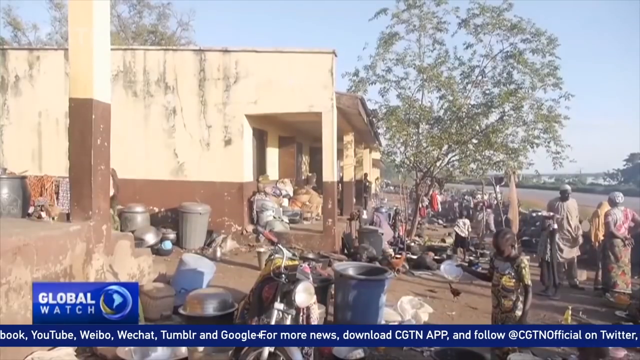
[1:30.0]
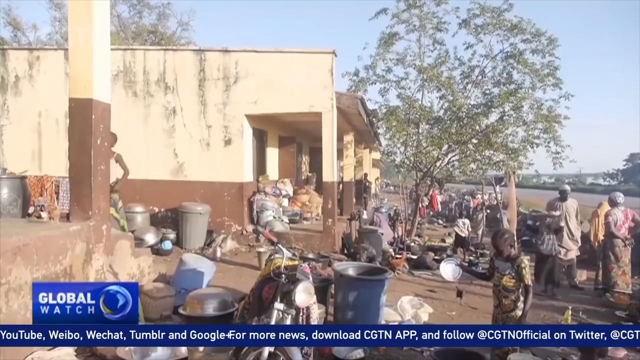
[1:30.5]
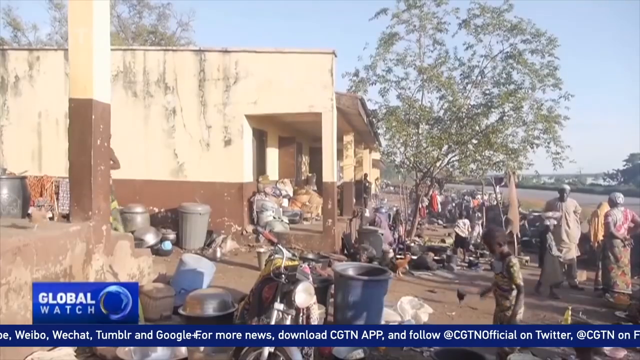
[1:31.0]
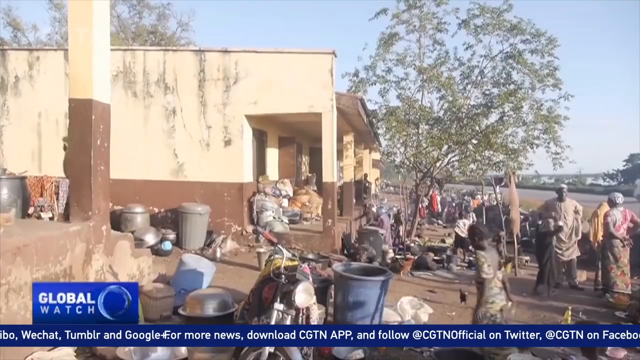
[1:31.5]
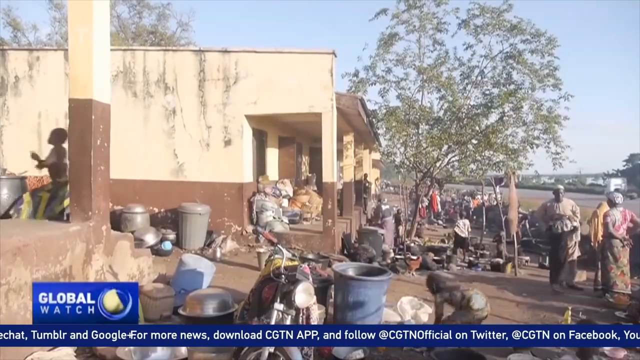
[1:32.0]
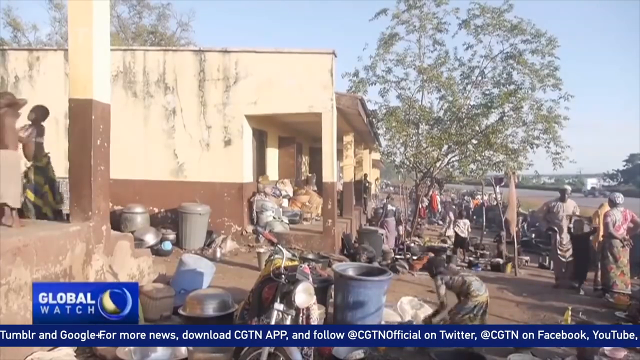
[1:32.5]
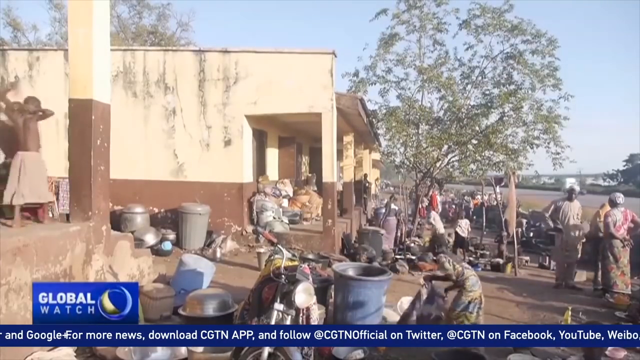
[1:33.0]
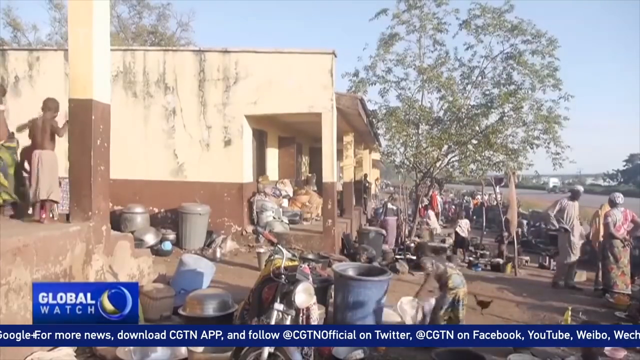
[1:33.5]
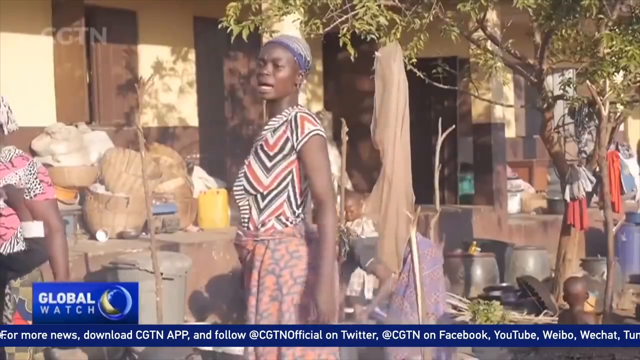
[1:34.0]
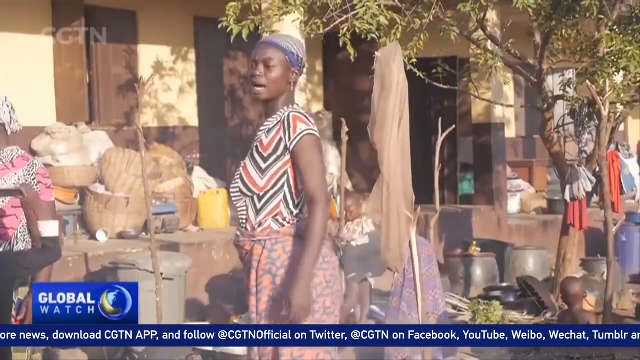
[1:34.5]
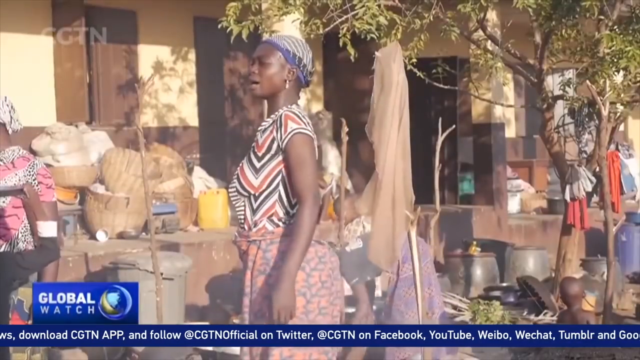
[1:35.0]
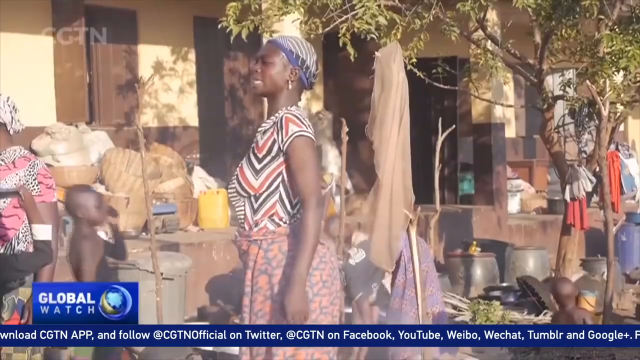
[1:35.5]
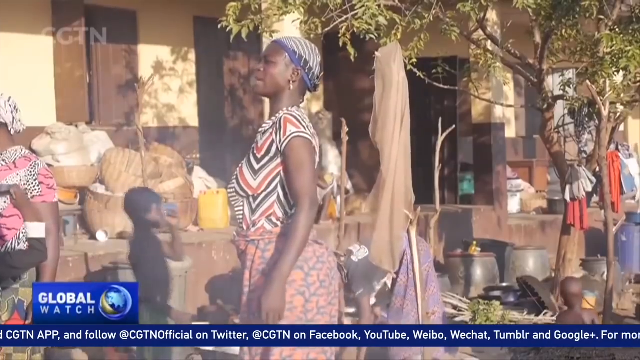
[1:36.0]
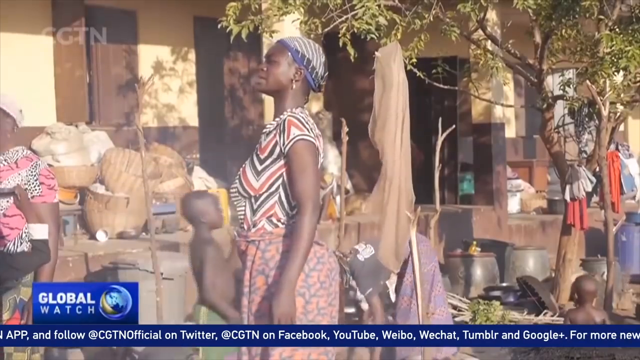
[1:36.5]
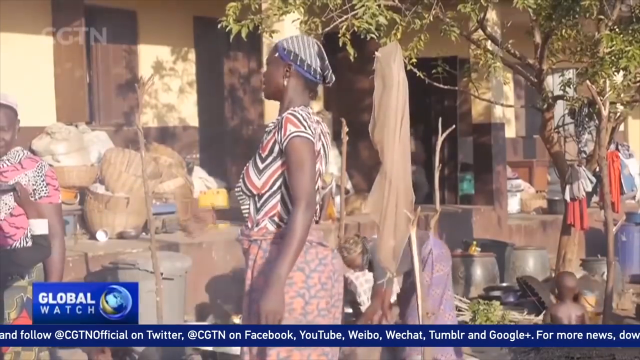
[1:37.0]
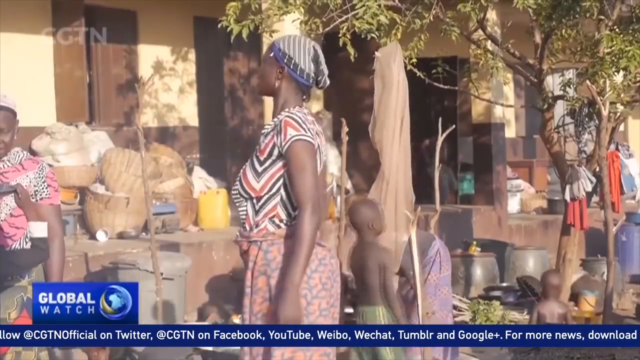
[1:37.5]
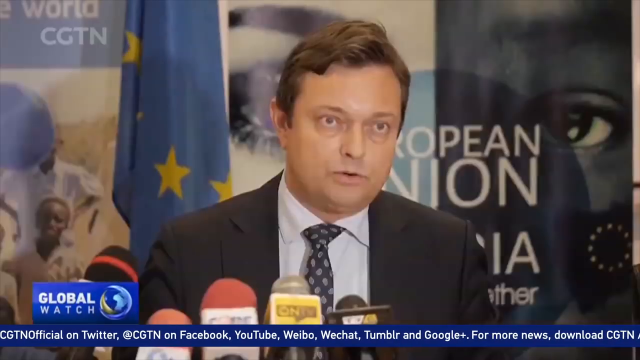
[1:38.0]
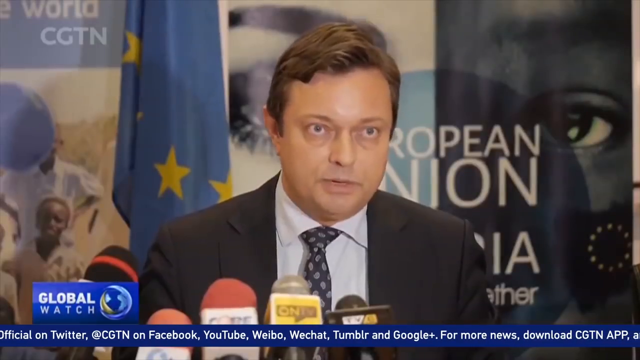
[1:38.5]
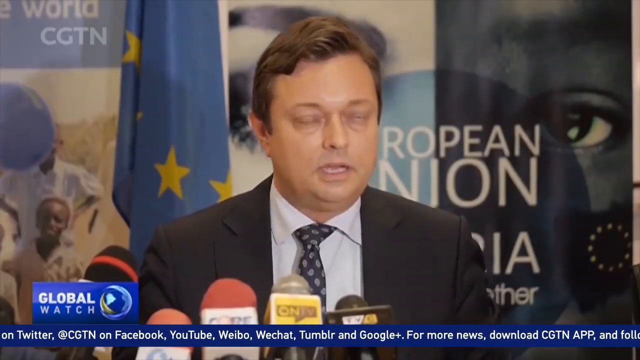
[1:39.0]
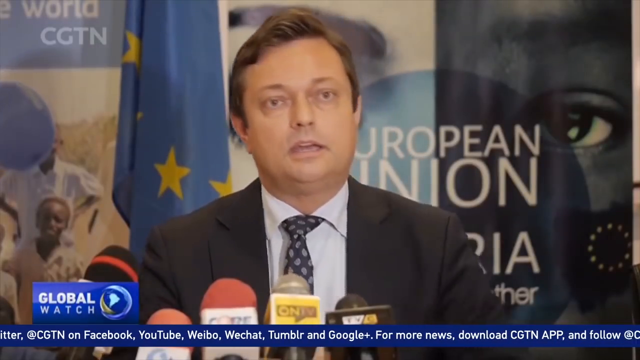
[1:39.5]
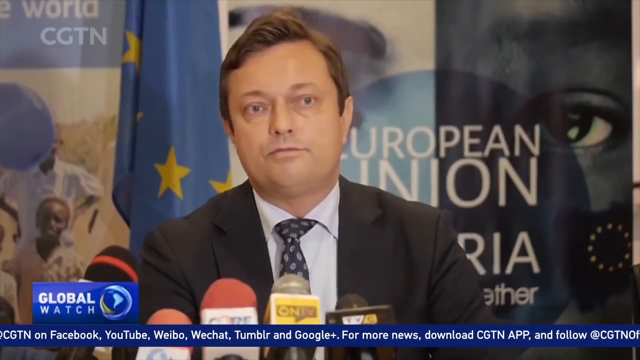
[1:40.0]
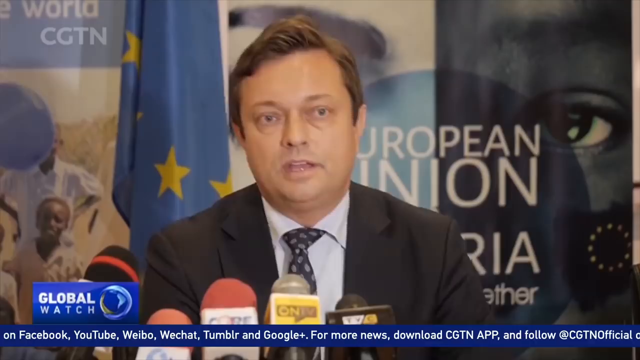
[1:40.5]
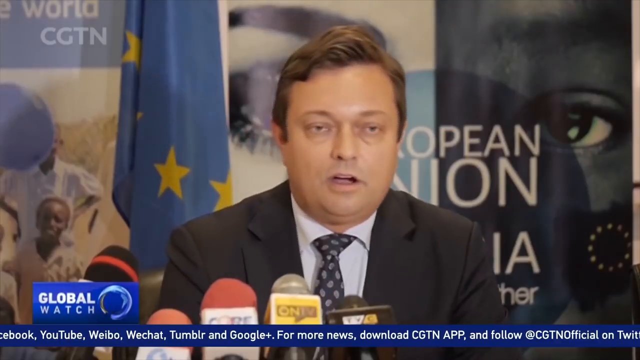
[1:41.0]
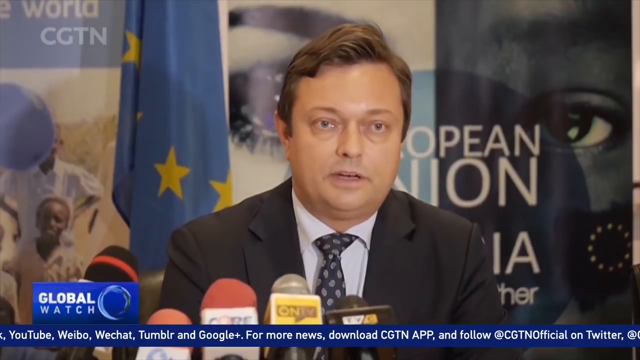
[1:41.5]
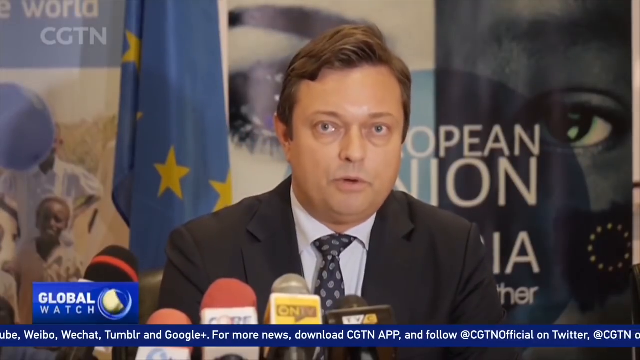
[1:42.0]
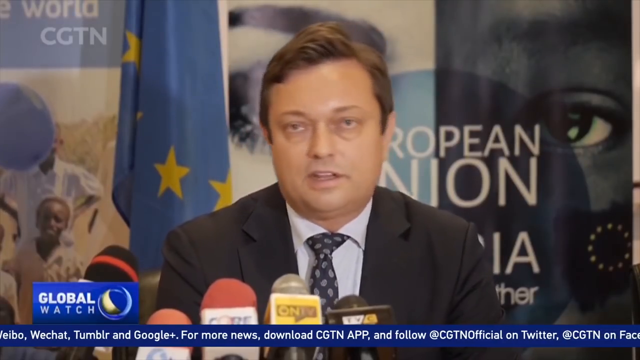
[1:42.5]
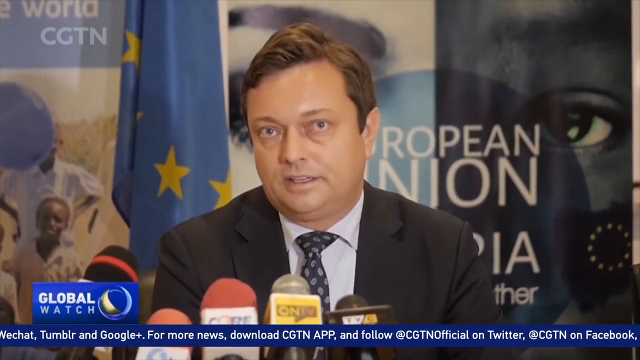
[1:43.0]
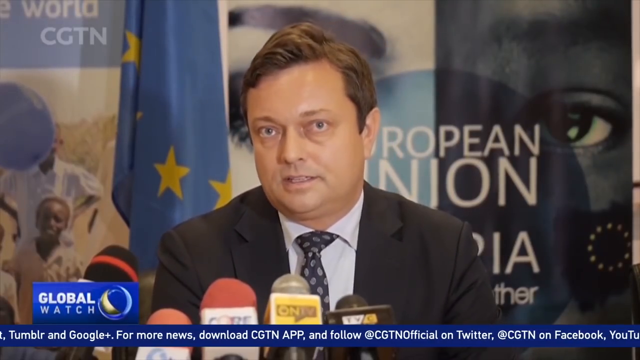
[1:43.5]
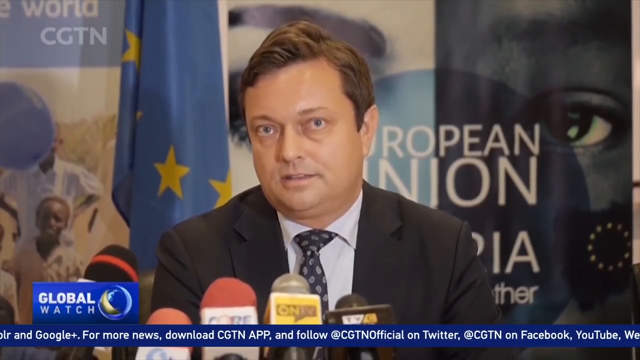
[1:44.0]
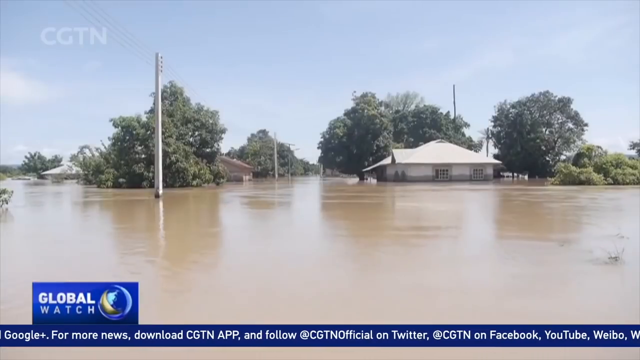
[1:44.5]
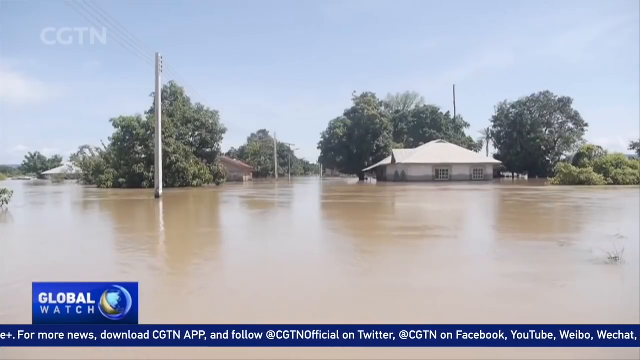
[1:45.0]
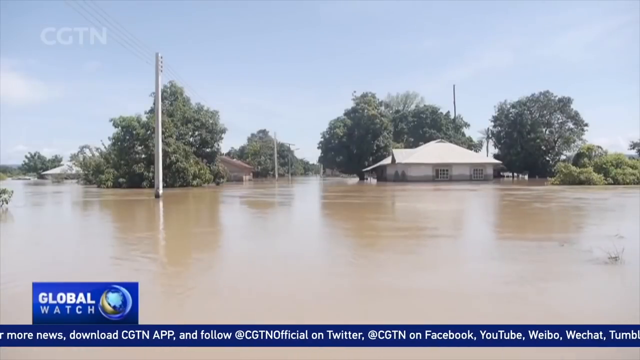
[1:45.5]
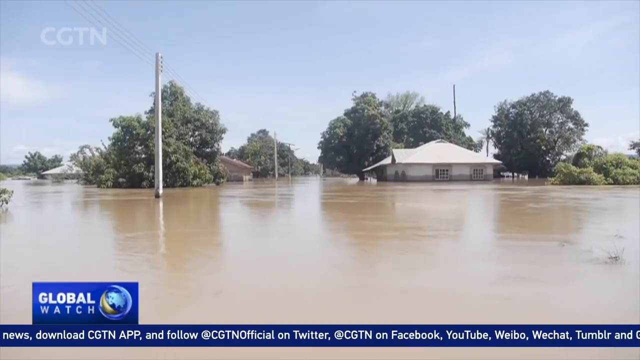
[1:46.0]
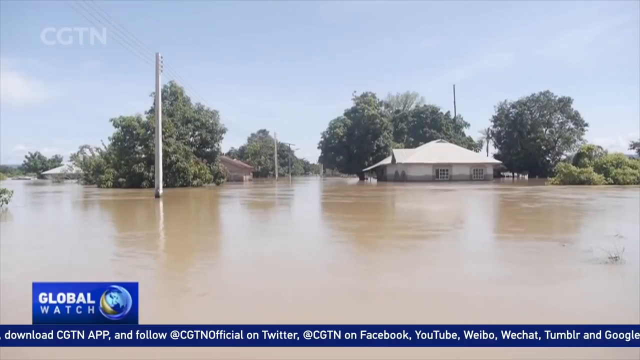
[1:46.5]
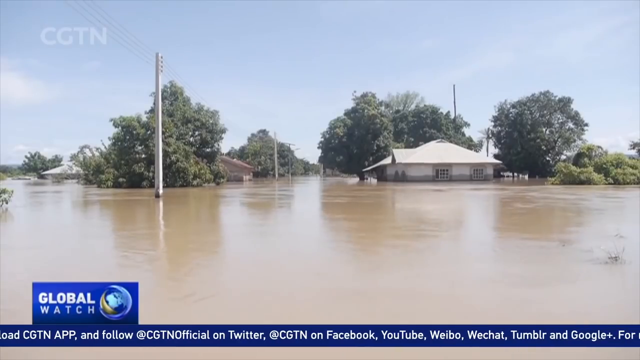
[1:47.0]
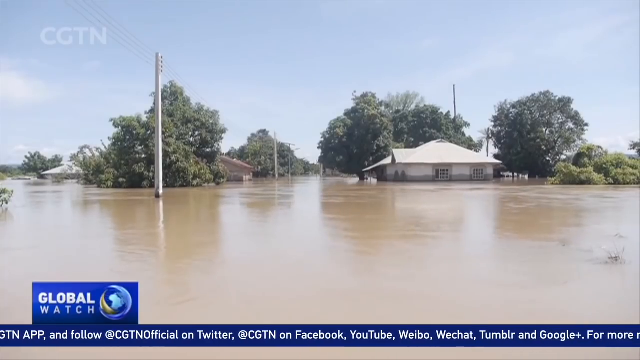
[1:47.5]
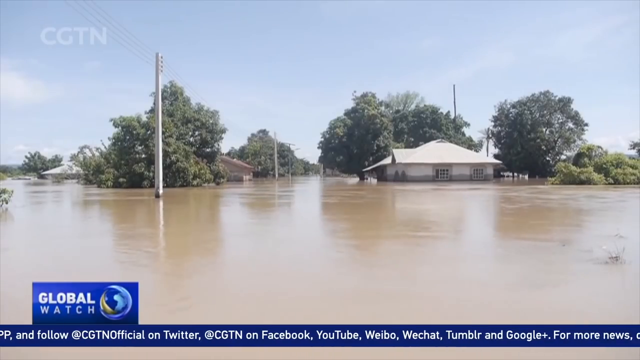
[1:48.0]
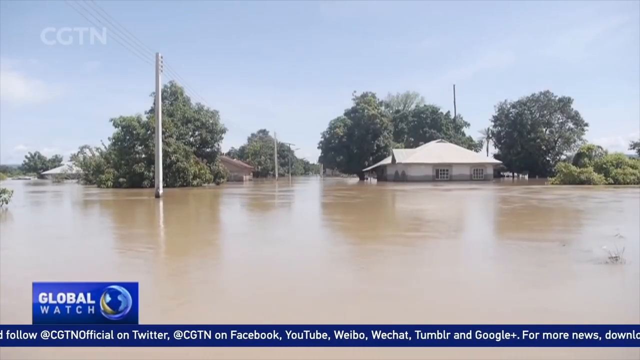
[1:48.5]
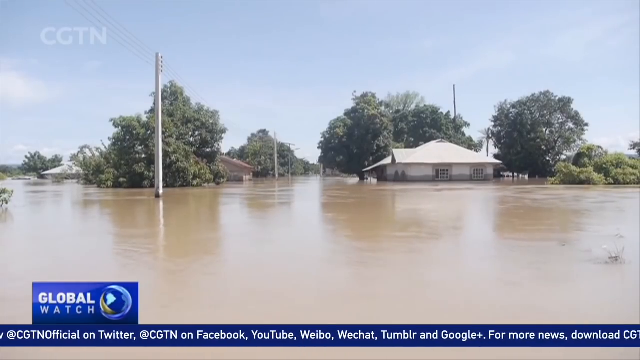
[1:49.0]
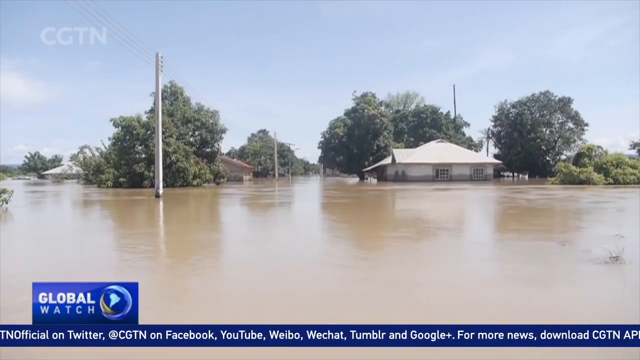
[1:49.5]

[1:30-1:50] Buildings, one of which looks like a school, are surrounded by children, men and women in what looks like a refugee camp. A woman in a striped shirt, with a cloth wrapped around her waist and a blue and white headscarf, stands up straight, looking out; she looks like she is calling out to someone or talking with someone. Children move around amid clutter everywhere: packets, clothes and containers. A fire burns on the ground, maybe for cooking. There are grass-woven baskets, and other women are tending to their children. The report is from CGTN World News.